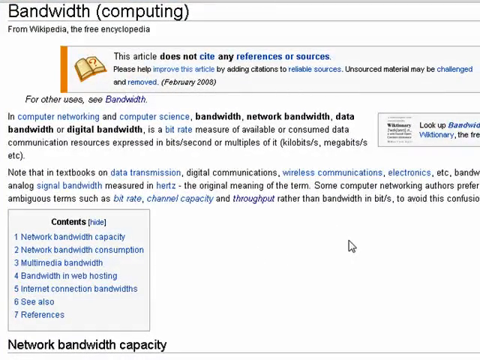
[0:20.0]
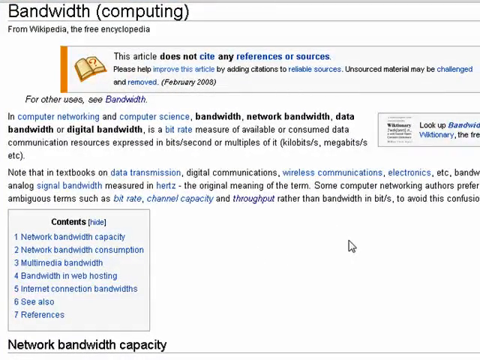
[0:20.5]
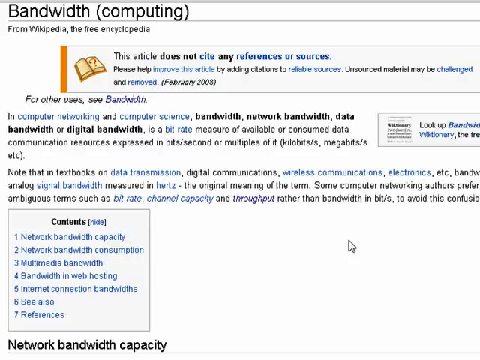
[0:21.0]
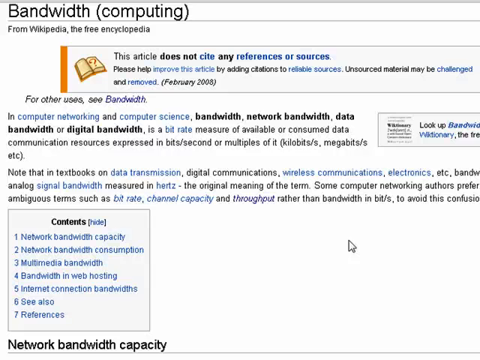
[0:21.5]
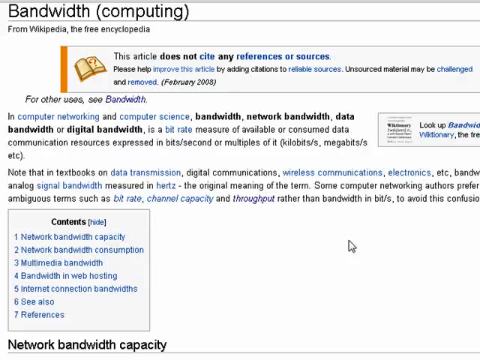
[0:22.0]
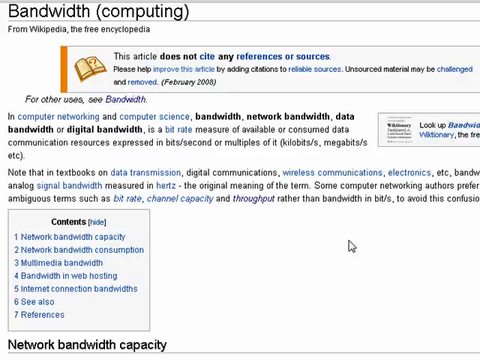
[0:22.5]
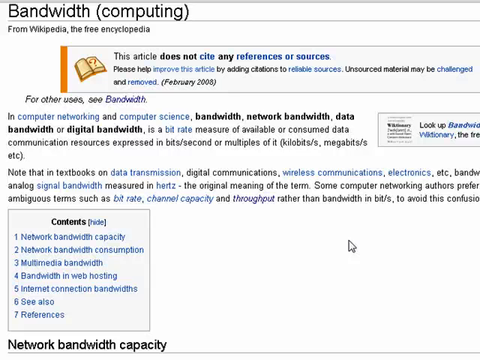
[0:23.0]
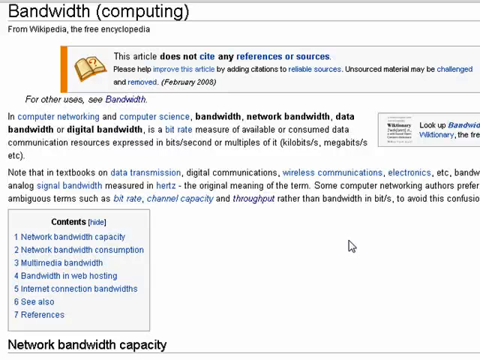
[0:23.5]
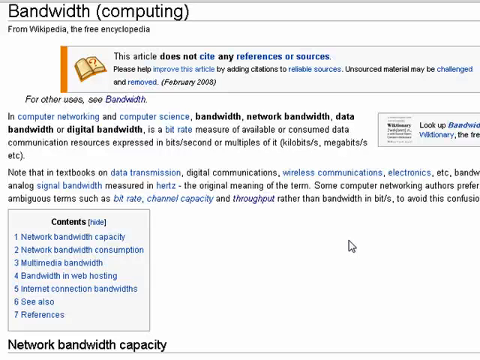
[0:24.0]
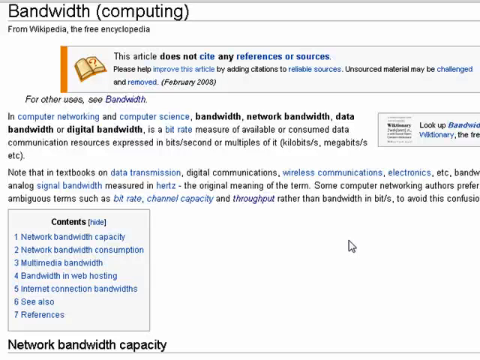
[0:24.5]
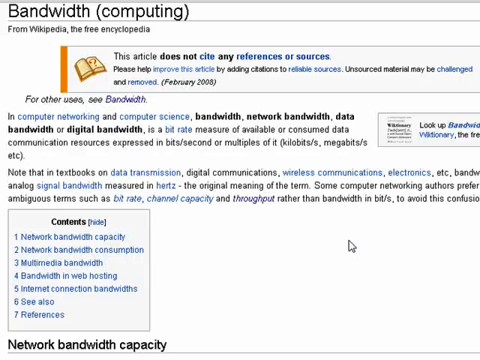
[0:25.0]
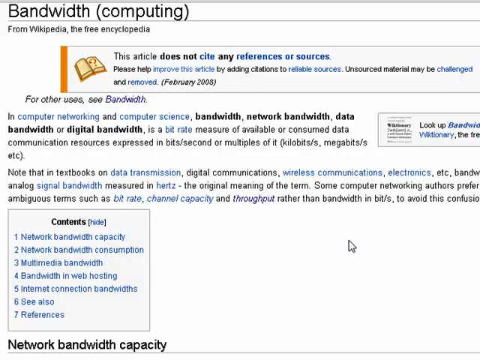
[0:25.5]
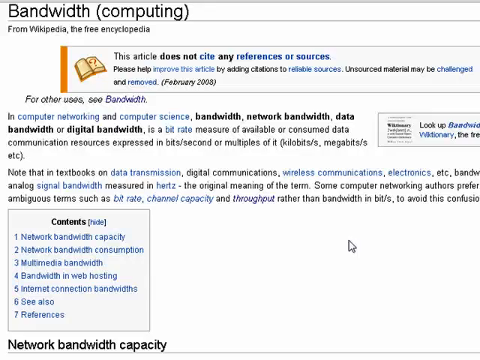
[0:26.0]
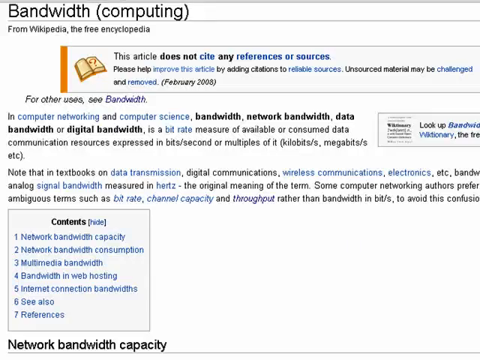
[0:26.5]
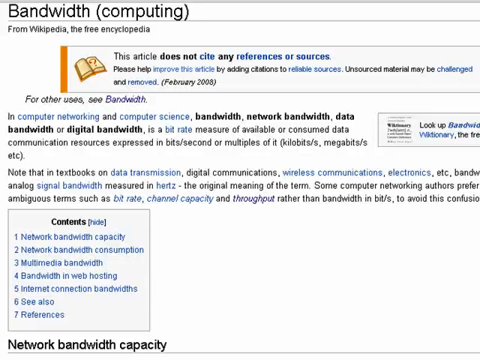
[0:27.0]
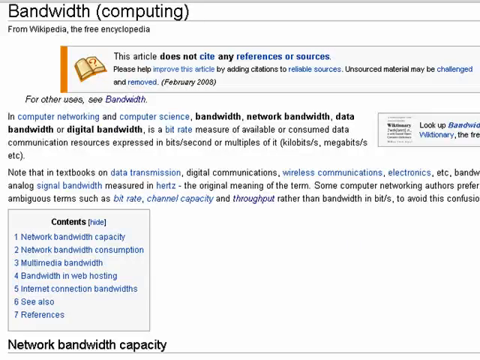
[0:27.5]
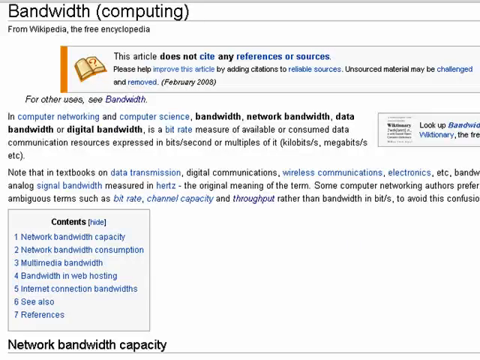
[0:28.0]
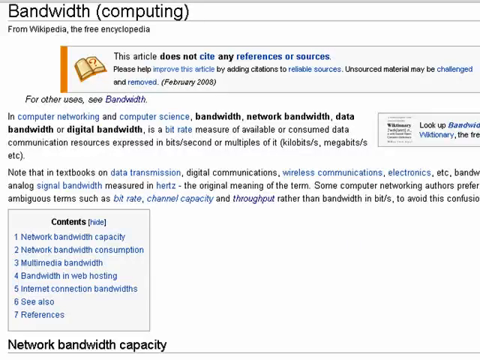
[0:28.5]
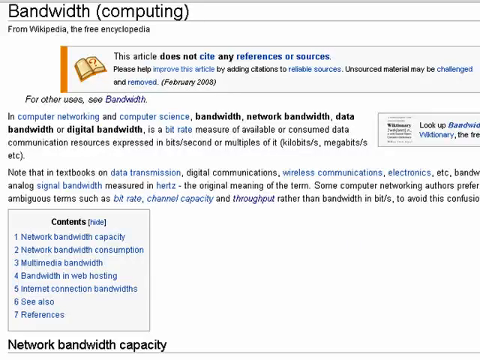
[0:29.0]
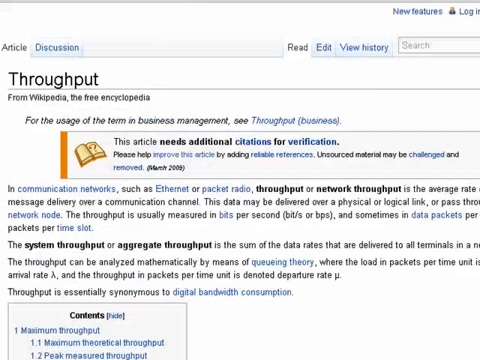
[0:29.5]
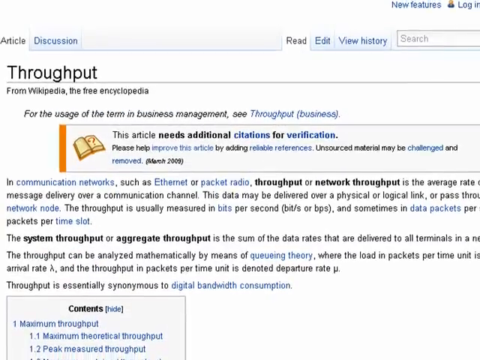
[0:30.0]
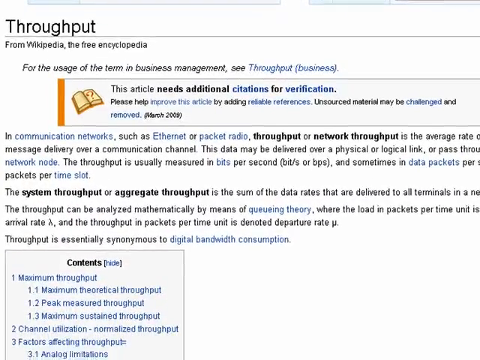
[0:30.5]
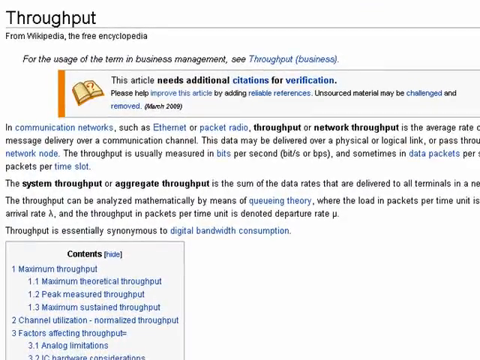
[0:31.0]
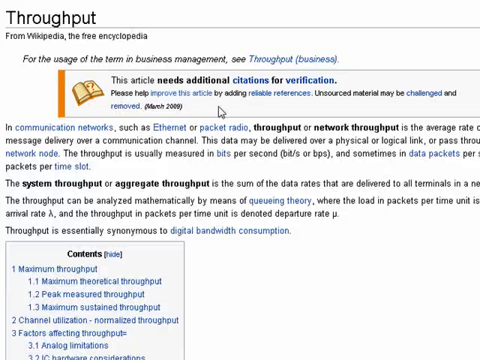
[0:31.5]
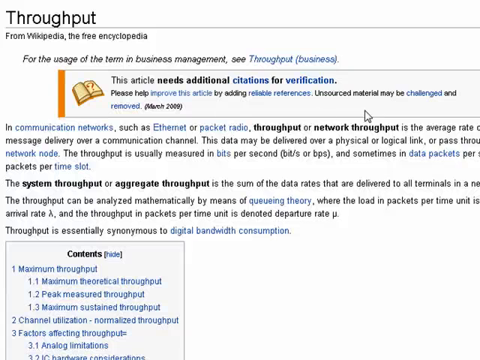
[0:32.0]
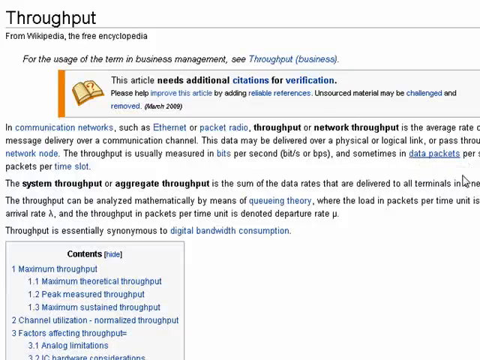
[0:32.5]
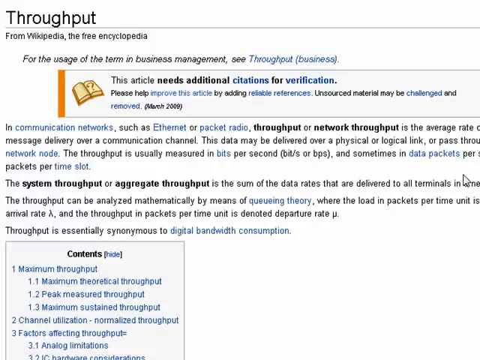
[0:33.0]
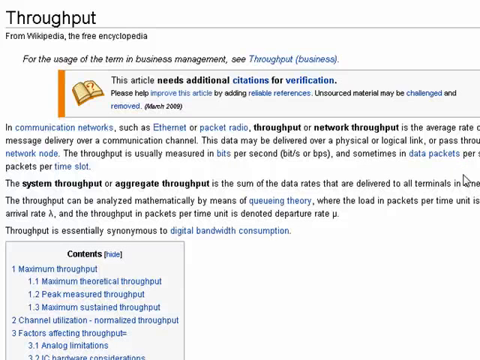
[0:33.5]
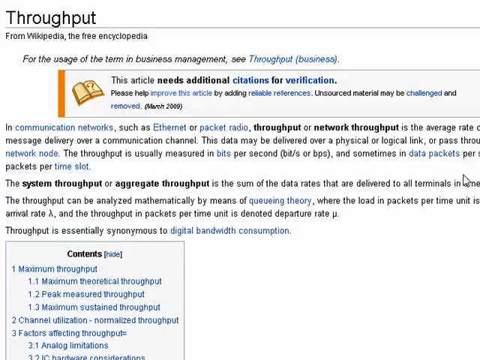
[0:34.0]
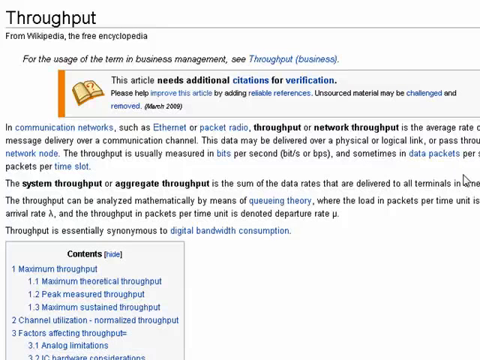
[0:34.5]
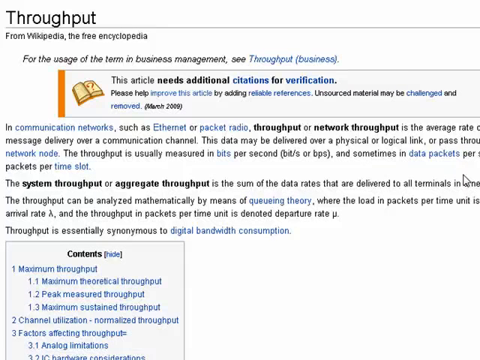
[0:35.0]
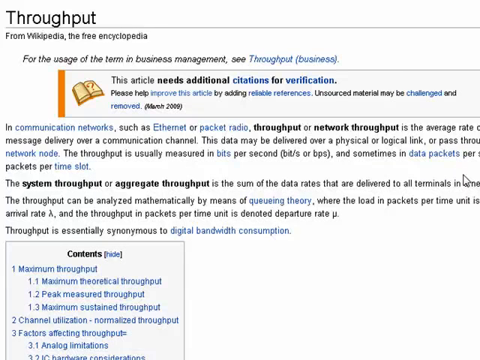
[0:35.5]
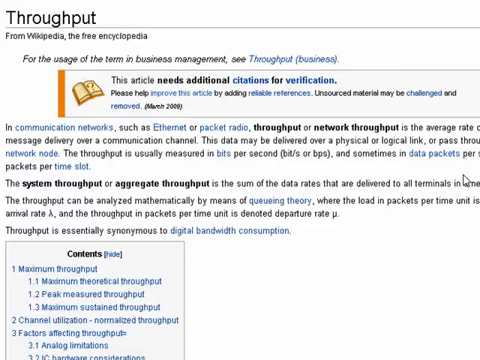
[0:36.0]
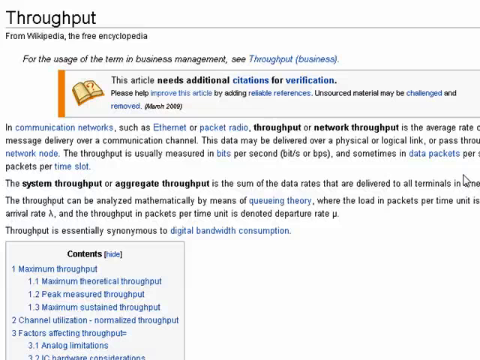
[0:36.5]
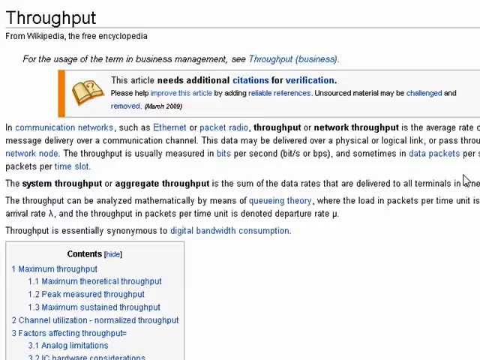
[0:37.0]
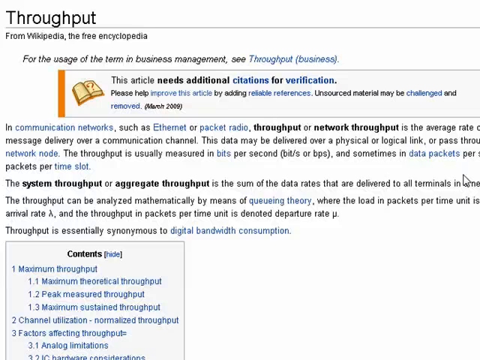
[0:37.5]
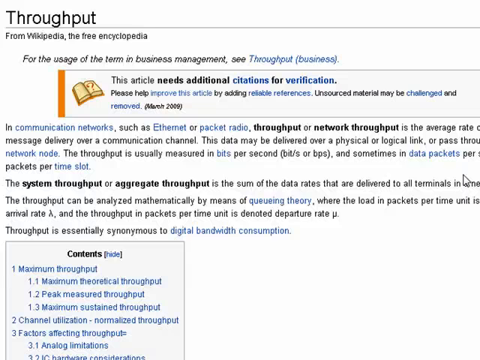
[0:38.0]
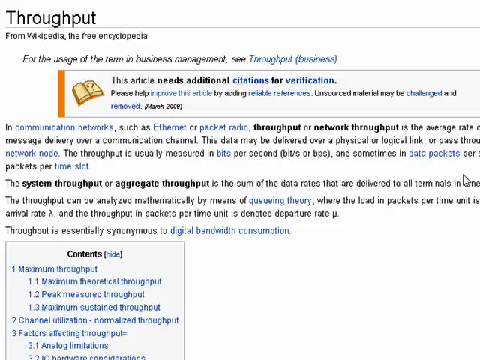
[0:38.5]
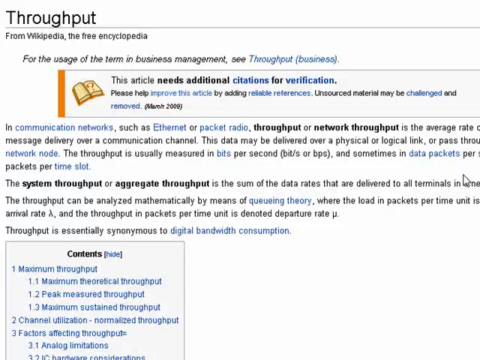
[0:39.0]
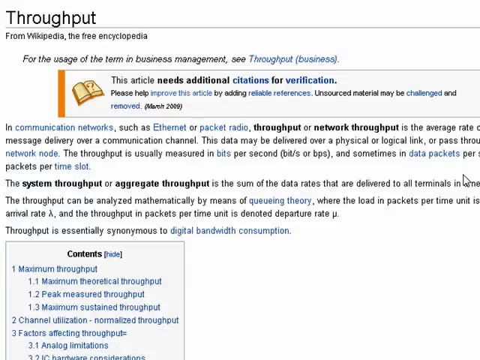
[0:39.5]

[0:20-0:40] The zoomed-in Wikipedia page shows "bandwidth" in the top left corner, with "from Wikipedia, the free encyclopedia" underneath it. Below are two paragraphs of information, and under them a square table of contents with seven links for bandwidth. The cursor is about three inches up from the right corner. It moves off the screen, and the page scrolls up a little and then down to a section called "throughput," which also has two paragraphs and the contents box in the bottom left corner. The cursor, at the right edge, goes down and left about two inches. The contents reads "network bandwidth capacity, network bandwidth consumption, multimedia bandwidth, bandwidth and web hosting, Internet connection bandwidth." Just above the first paragraph, about two inches in from the left, is a rectangle with a little orange border that reads "the article does not cite any references or sources."